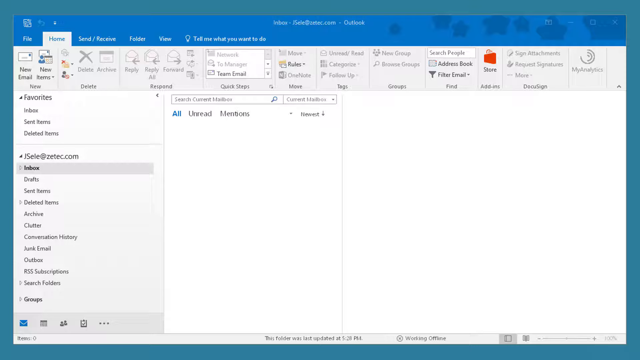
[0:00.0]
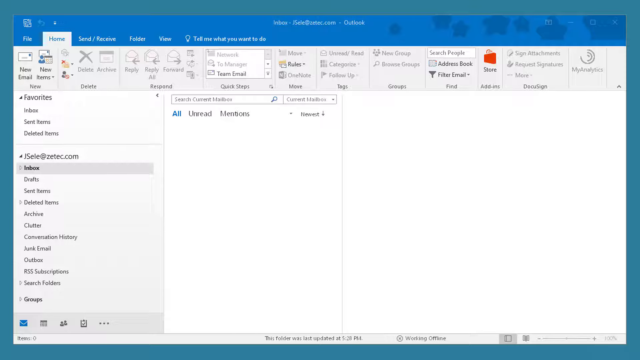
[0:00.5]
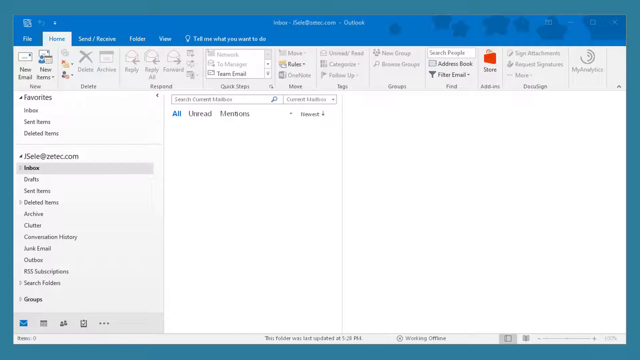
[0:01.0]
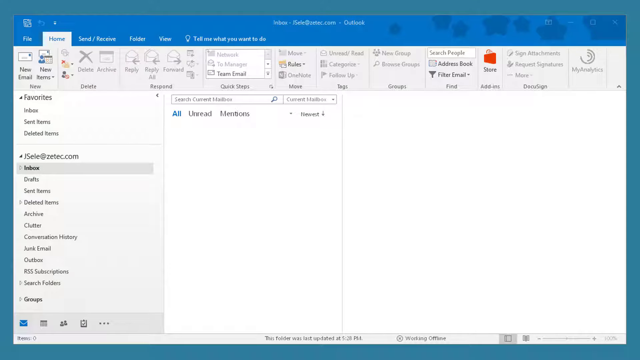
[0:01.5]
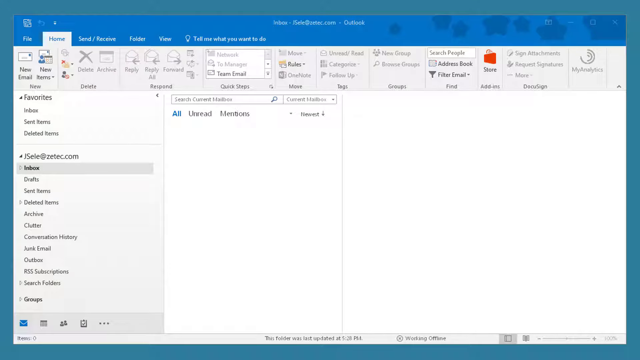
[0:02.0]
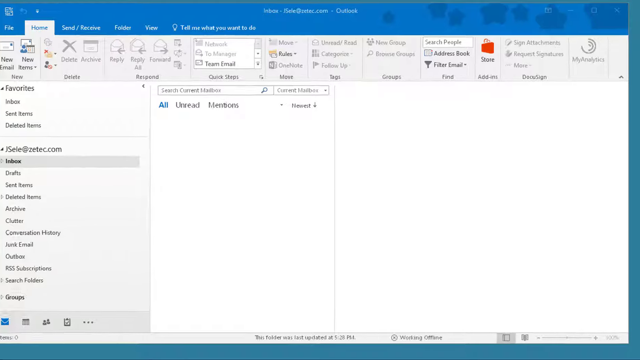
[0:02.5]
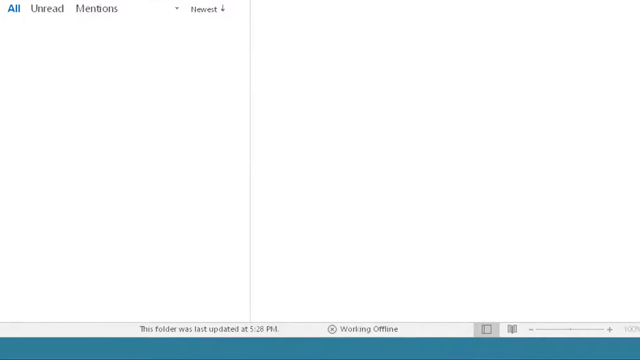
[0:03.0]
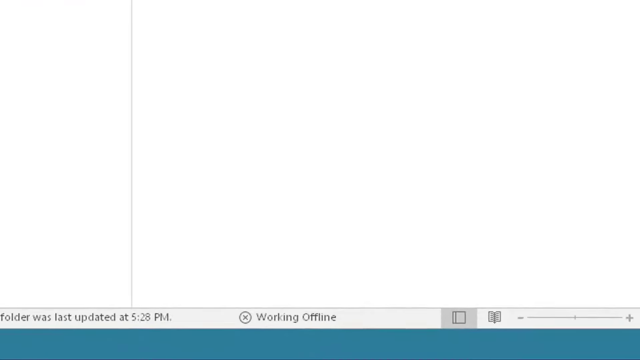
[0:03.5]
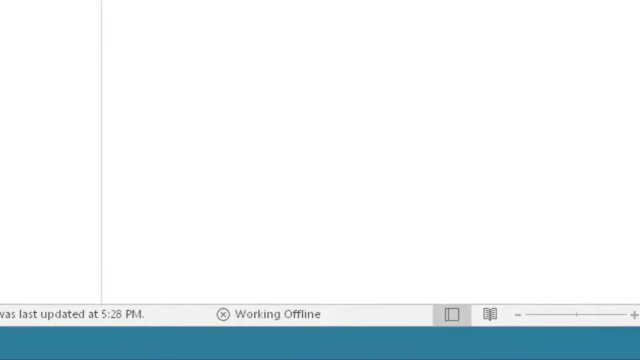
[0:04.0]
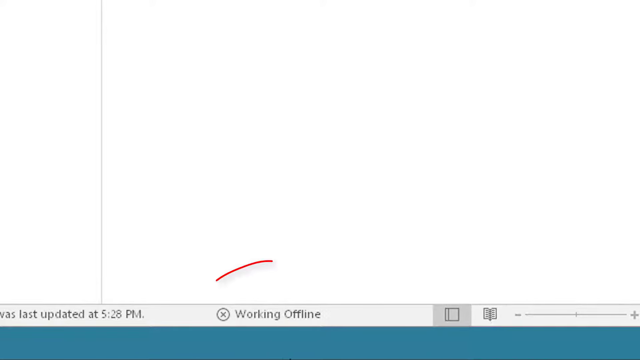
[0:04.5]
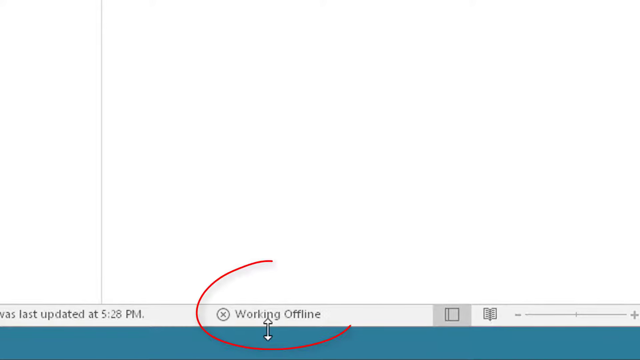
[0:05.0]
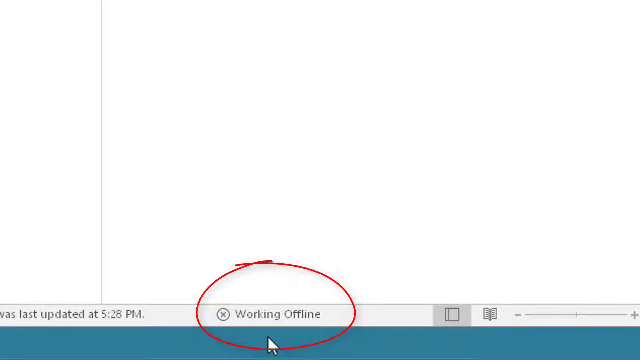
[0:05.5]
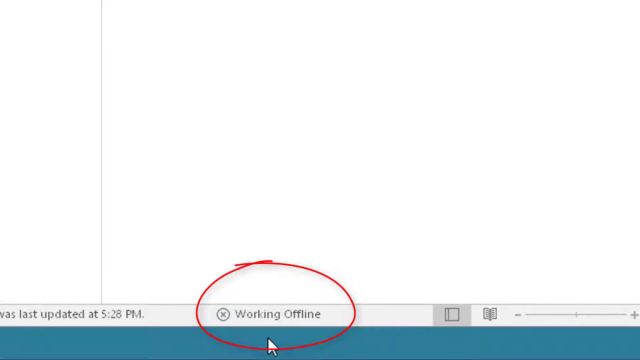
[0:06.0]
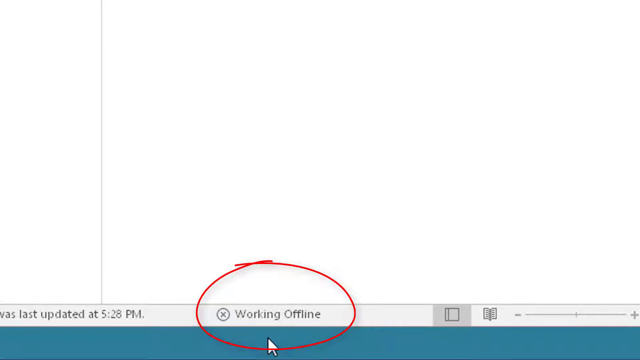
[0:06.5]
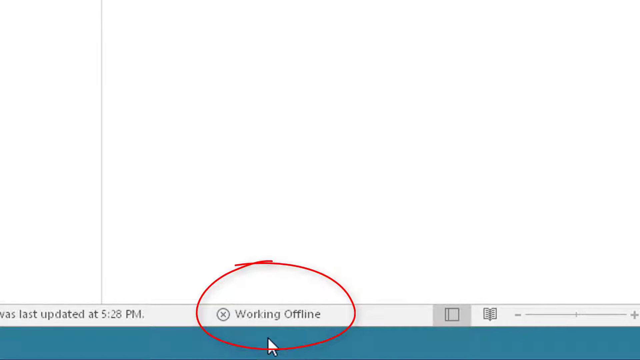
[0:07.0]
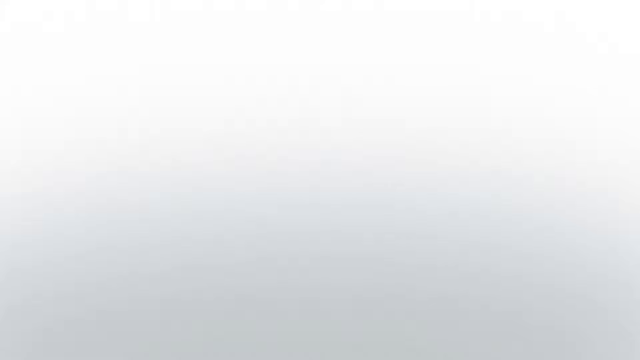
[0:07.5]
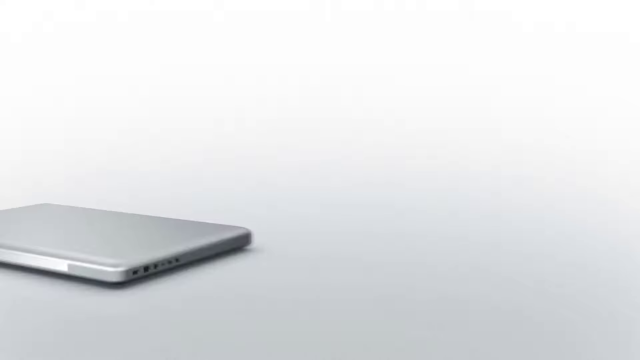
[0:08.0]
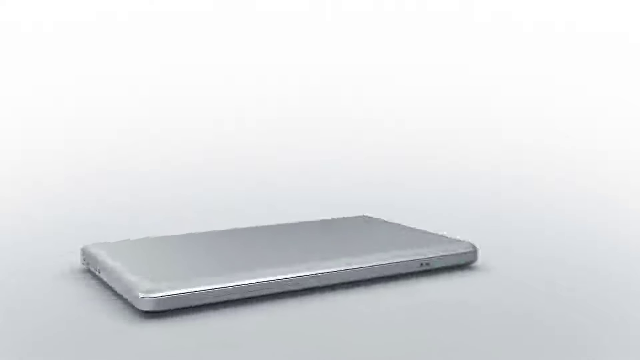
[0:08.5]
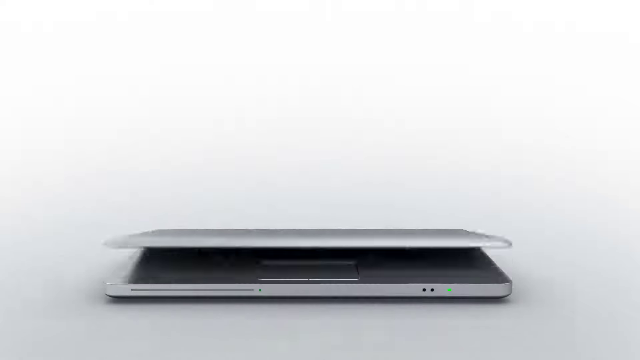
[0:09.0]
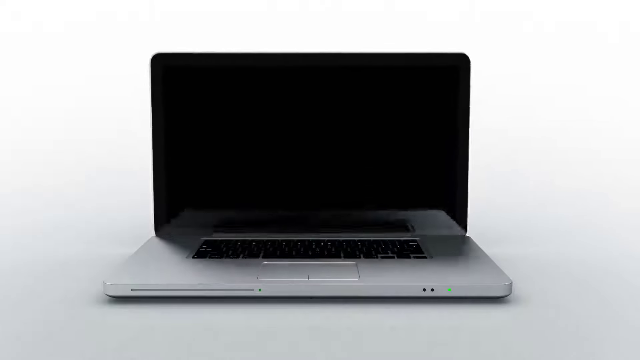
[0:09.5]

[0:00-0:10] A technology demonstration takes place on a computer screen. The view zooms in on the lower part of the screen, where a status indicates that the account is working offline; the person giving the demonstration highlights this status with a red circle. The offline status appears in a view of an Outlook email inbox in which nothing is showing. An image of a laptop then appears.